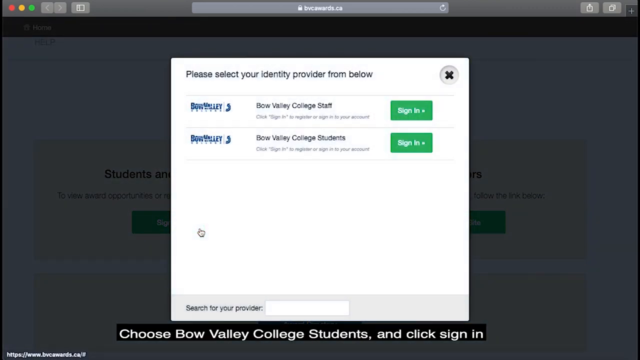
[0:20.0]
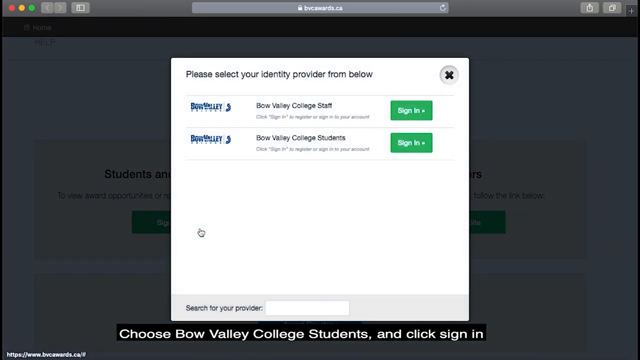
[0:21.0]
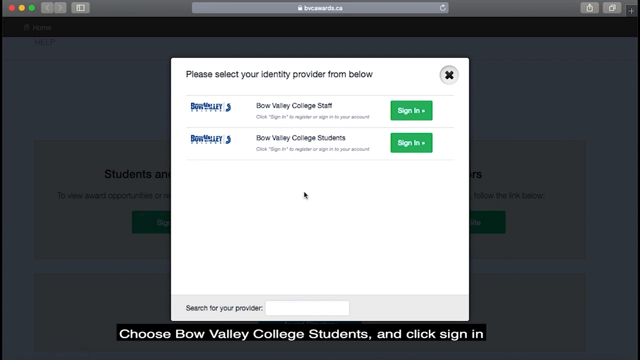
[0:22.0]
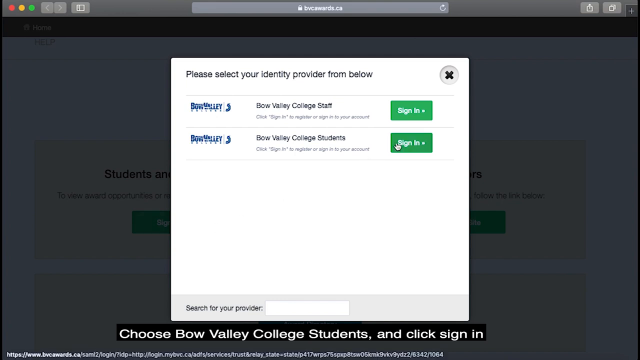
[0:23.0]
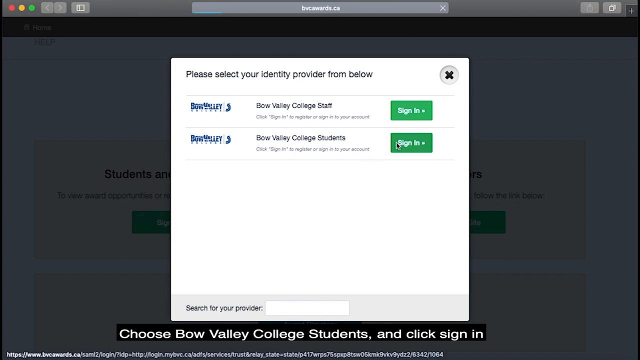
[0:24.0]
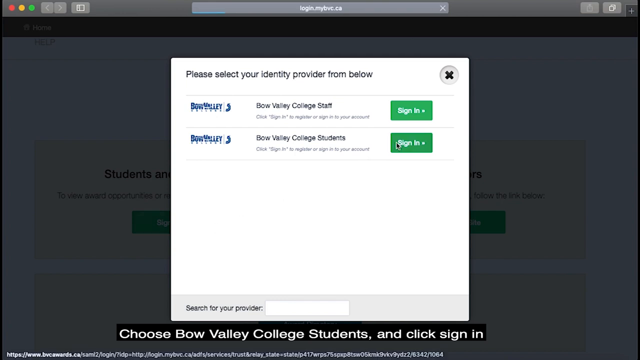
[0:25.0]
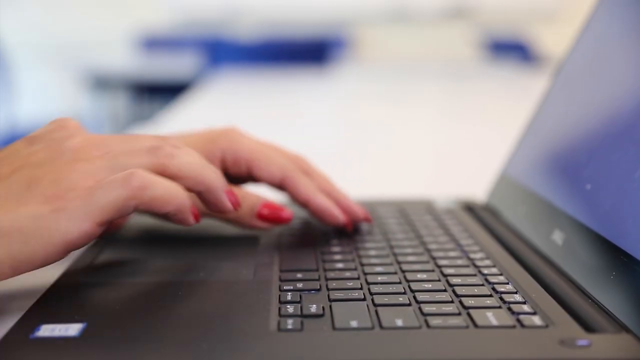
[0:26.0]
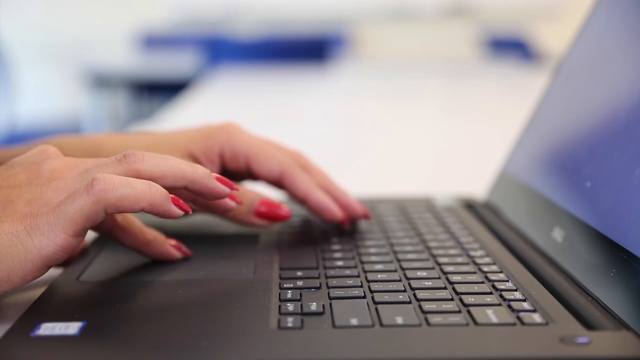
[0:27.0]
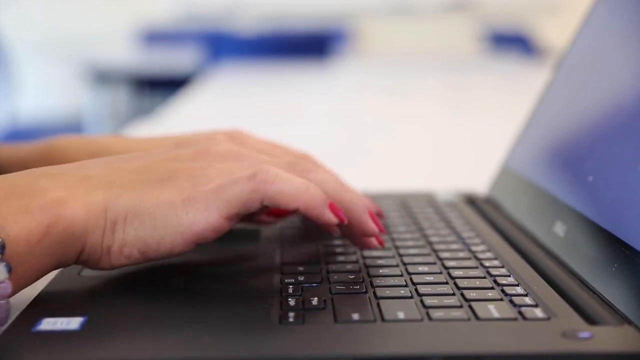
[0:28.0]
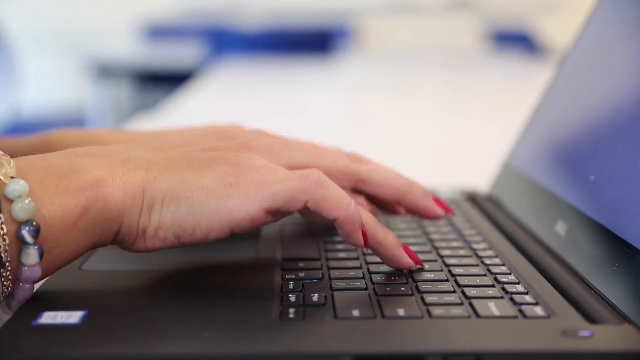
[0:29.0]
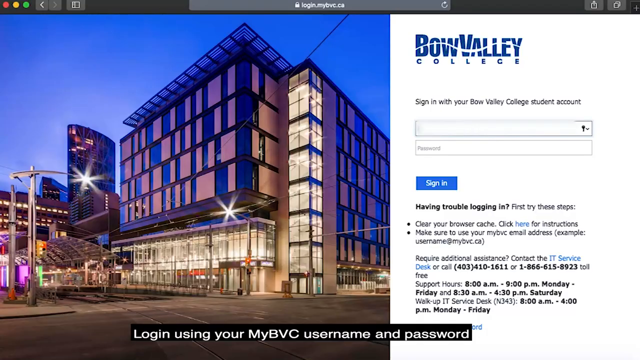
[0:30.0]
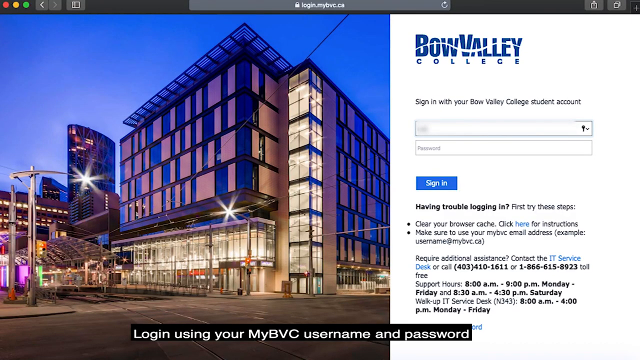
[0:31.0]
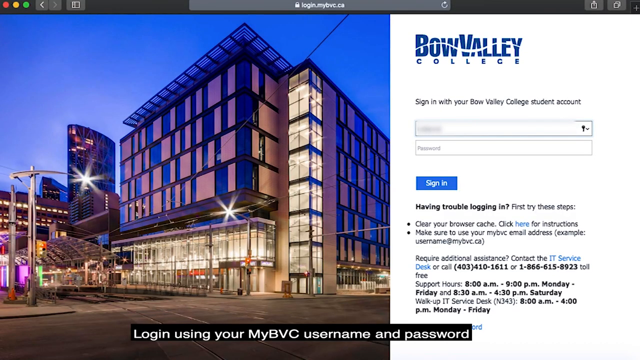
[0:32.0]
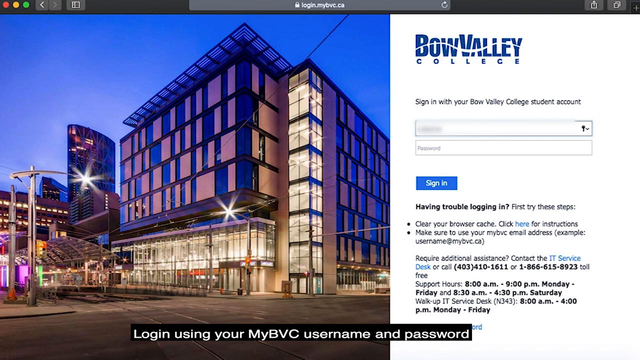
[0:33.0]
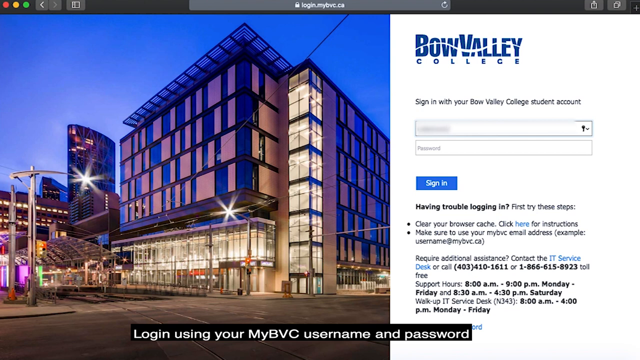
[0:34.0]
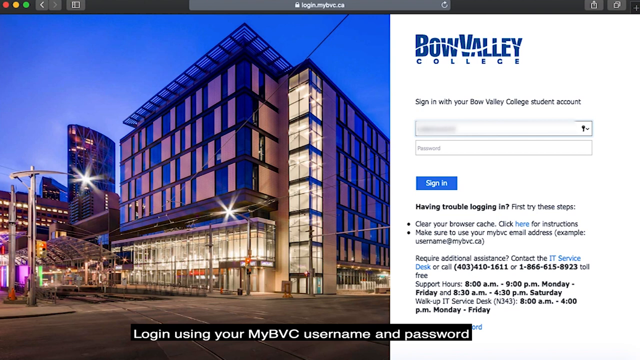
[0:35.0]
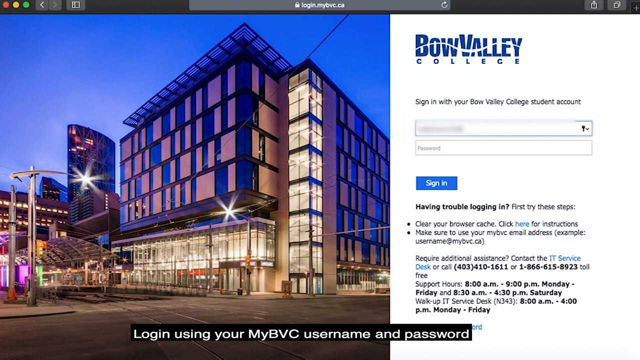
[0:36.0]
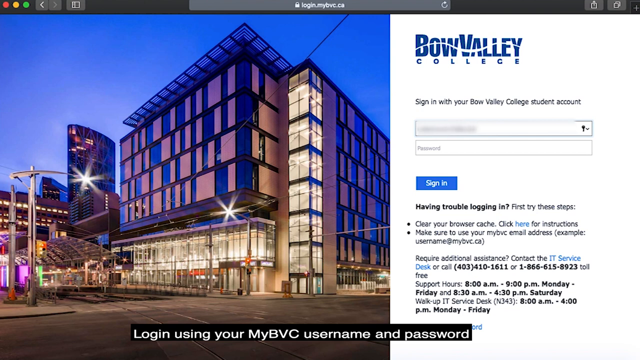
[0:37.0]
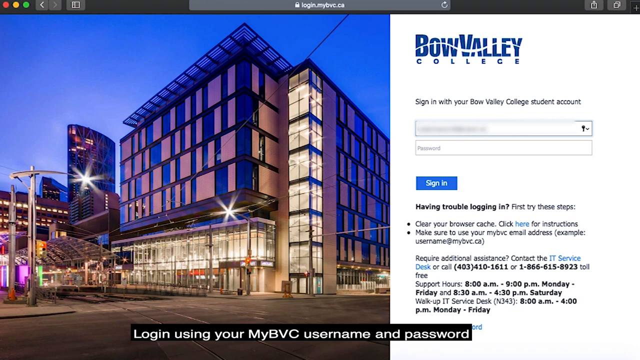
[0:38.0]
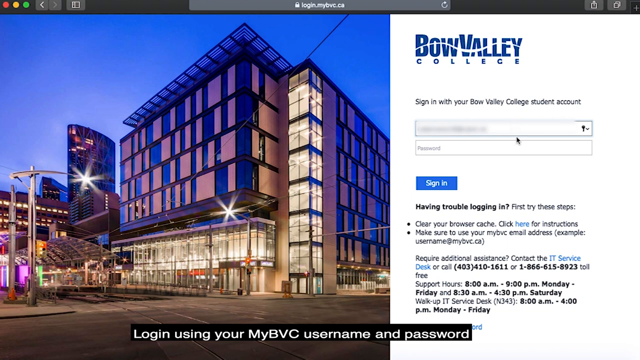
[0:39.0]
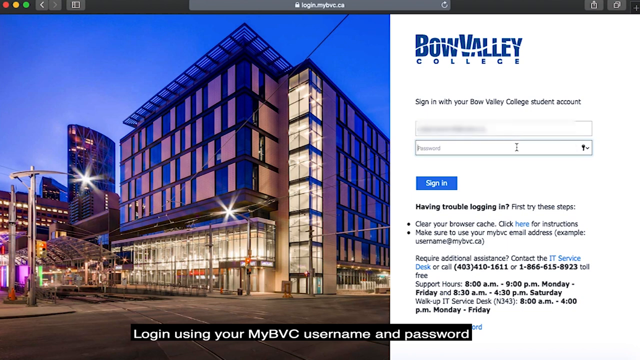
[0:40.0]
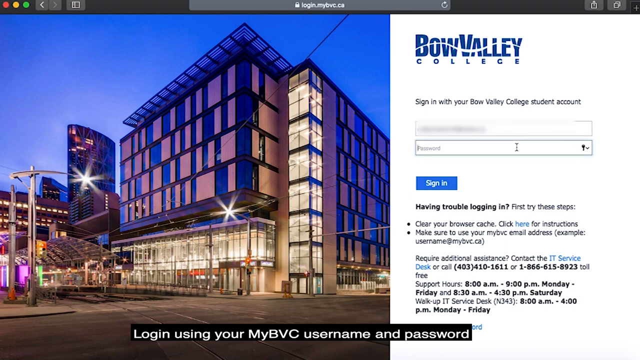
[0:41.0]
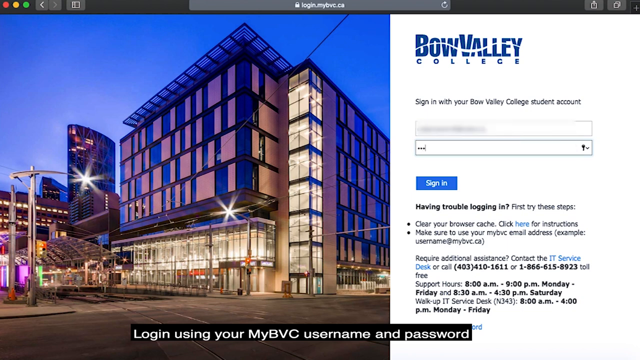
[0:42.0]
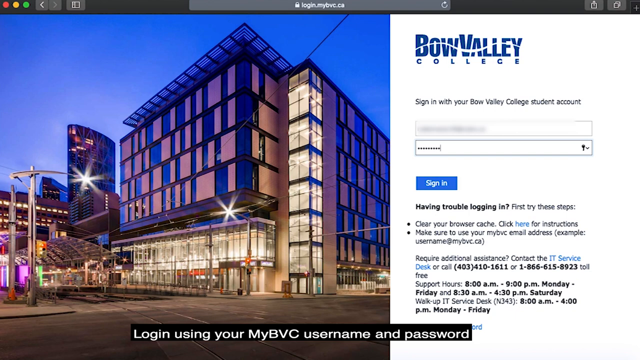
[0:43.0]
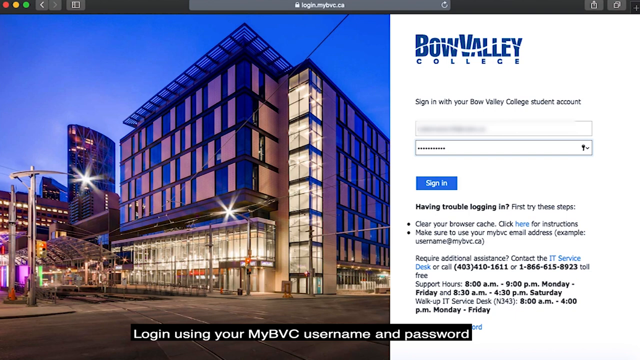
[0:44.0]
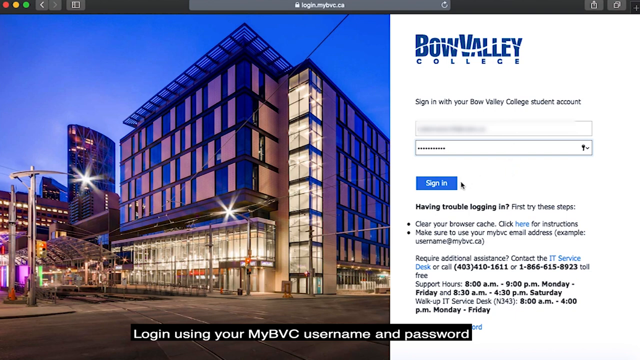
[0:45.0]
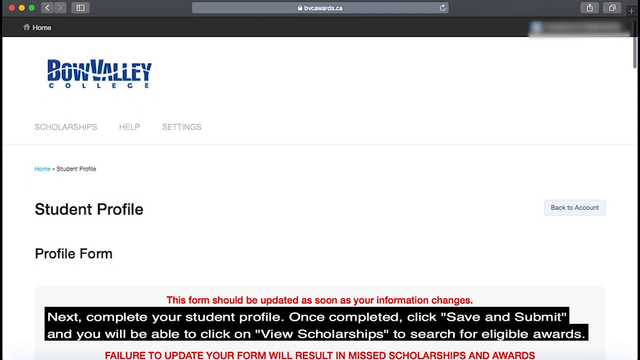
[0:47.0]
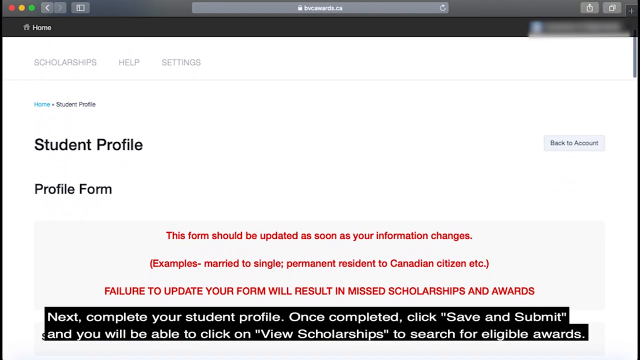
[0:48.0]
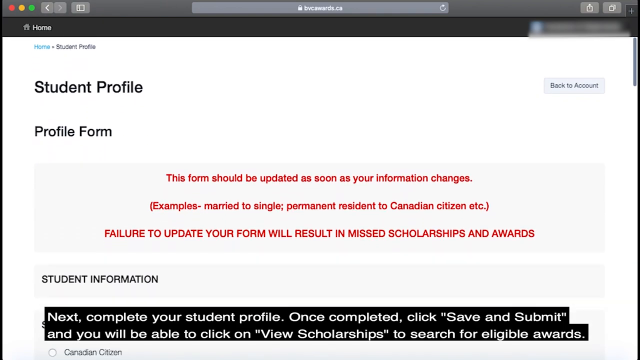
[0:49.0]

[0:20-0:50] A faded screen is in the background with a smaller white box in front of it. At the very top left-hand corner of the box, black writing says "please select your identity provider from below", and below that are the options "Bow Valley College staff" and "Bow Valley College students", with green rectangular boxes reading "sign in" to their right. The lady is then shown typing; she has red nail varnish on, and the view is from the right-hand side looking forward. The screen changes to the outside of the college, with a couple of lights on, at night time or in the early morning. The screen is split, with the college setting taking up three quarters on the left-hand side and a white panel background on the right-hand side. The words "Bow Valley College" appear, and below it says "sign in with your Bow Valley College student account". There are boxes to type in, and below them is a blue box in the centre that says "sign in". The process of typing a username and password is shown, and the lady clicks the sign in tab with her mouse.